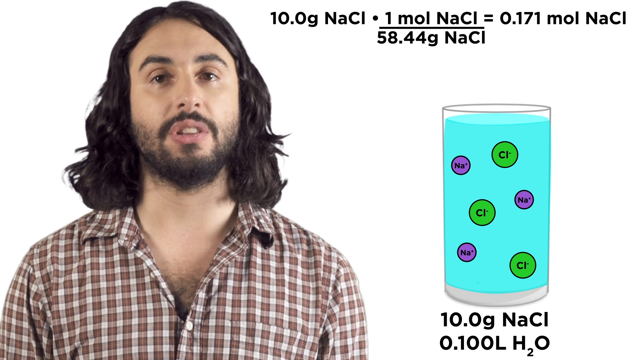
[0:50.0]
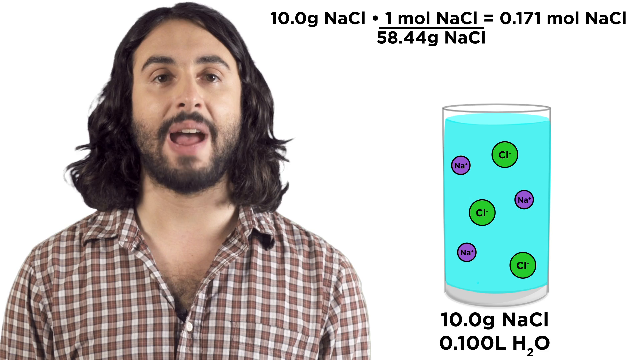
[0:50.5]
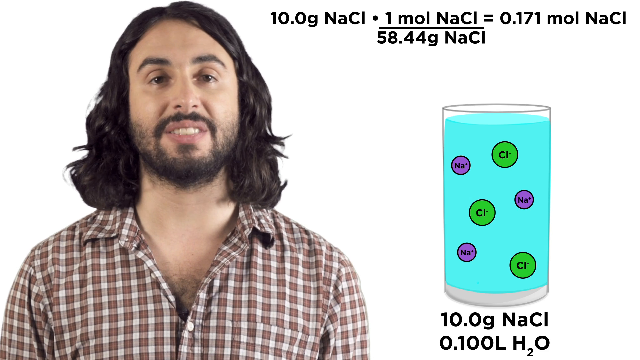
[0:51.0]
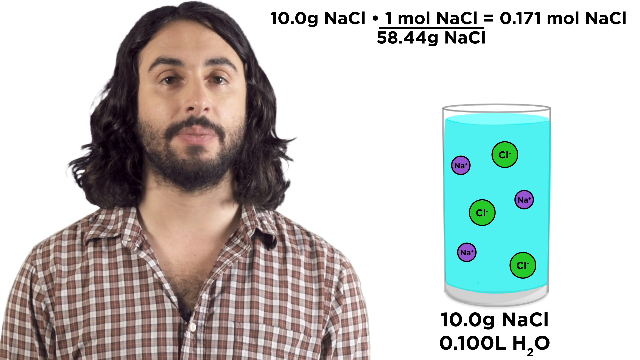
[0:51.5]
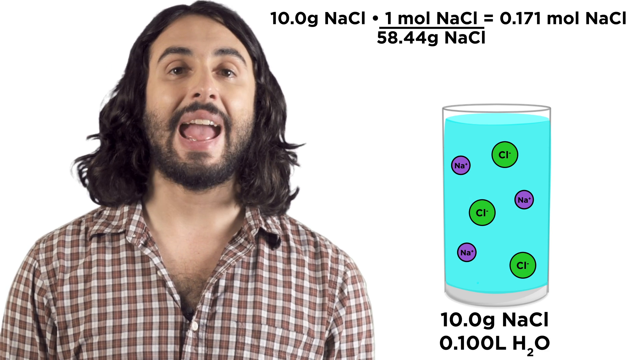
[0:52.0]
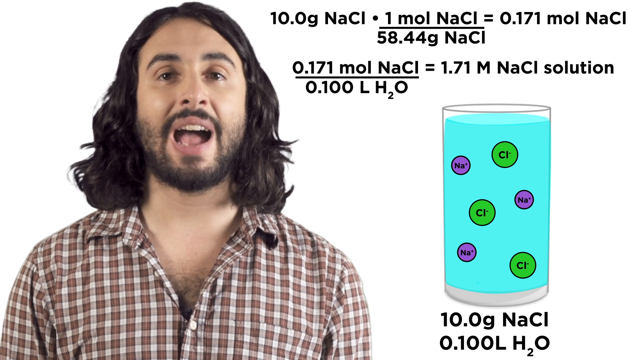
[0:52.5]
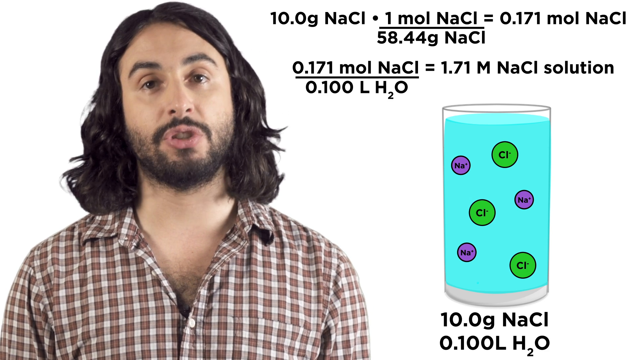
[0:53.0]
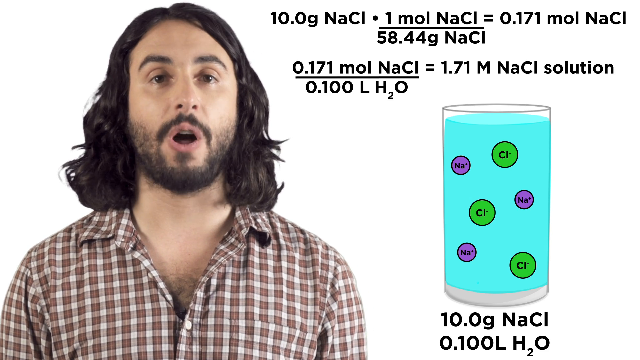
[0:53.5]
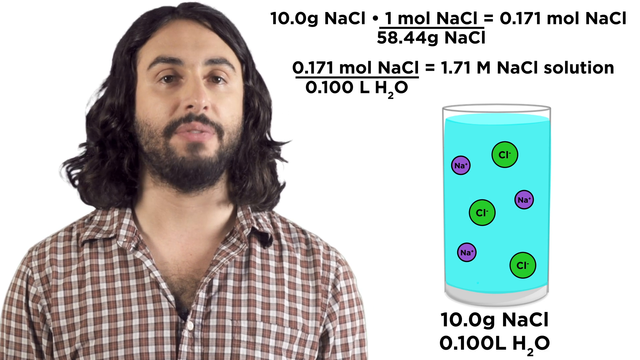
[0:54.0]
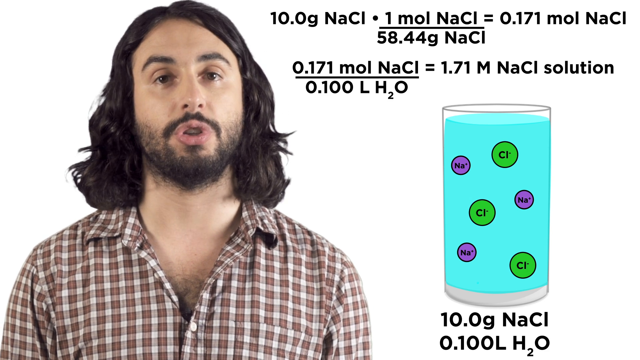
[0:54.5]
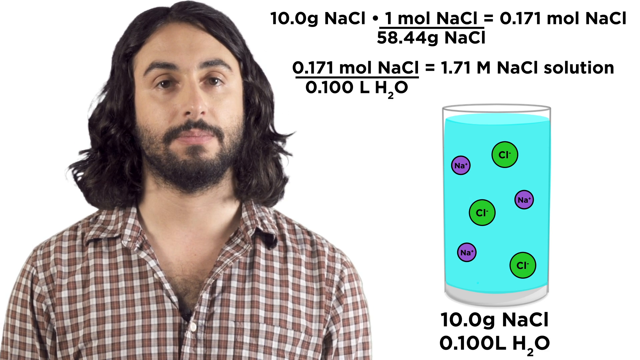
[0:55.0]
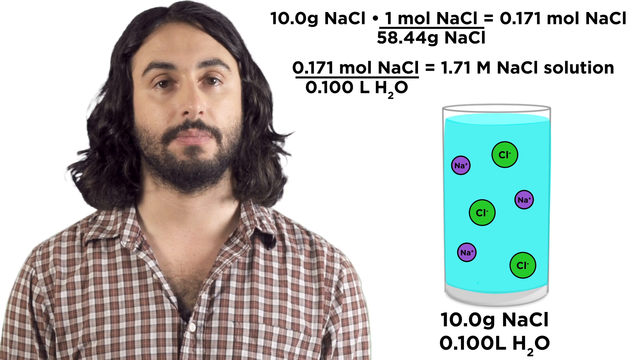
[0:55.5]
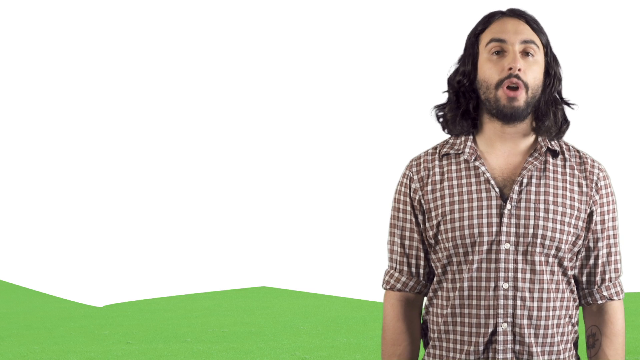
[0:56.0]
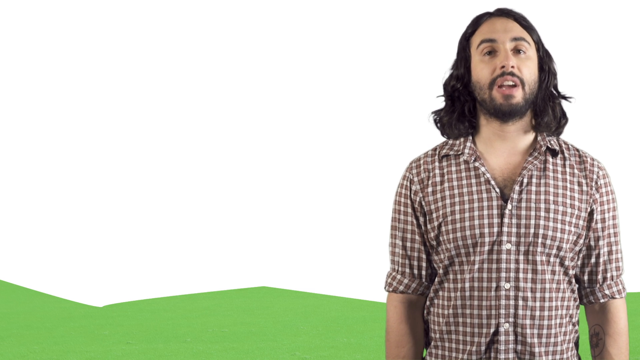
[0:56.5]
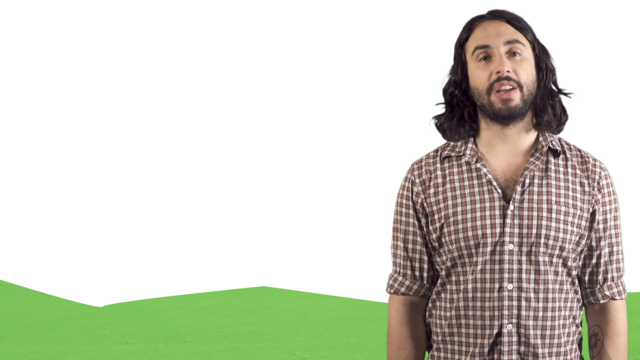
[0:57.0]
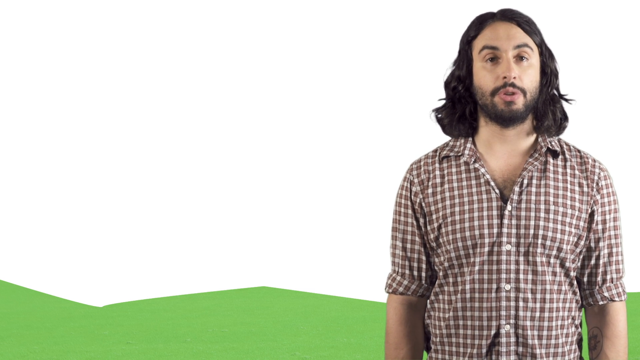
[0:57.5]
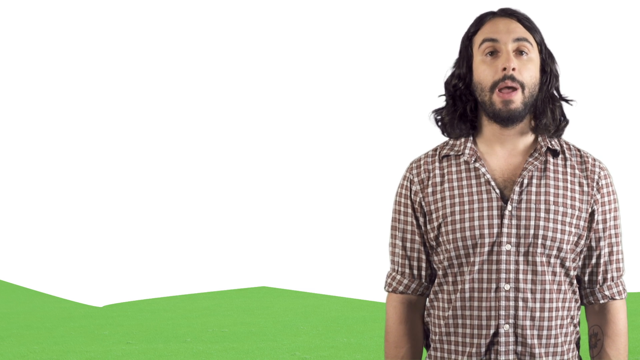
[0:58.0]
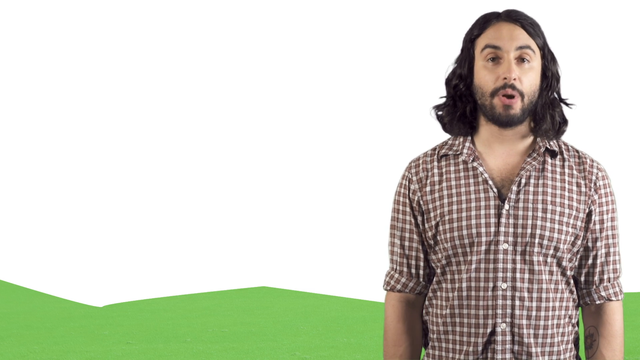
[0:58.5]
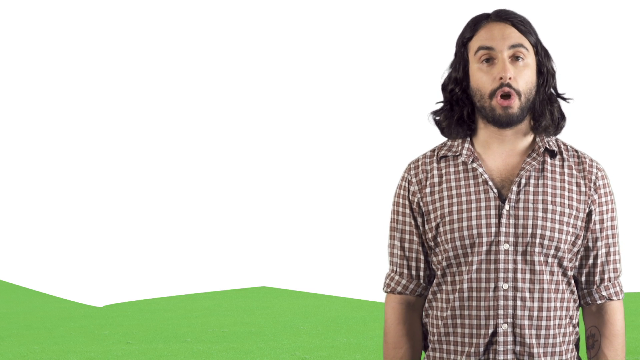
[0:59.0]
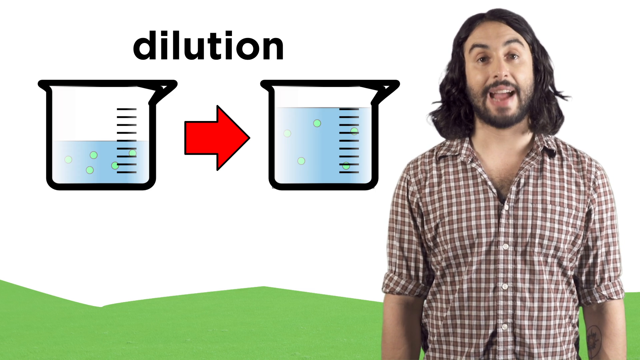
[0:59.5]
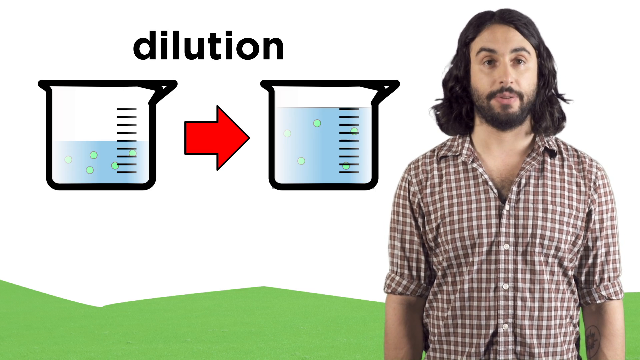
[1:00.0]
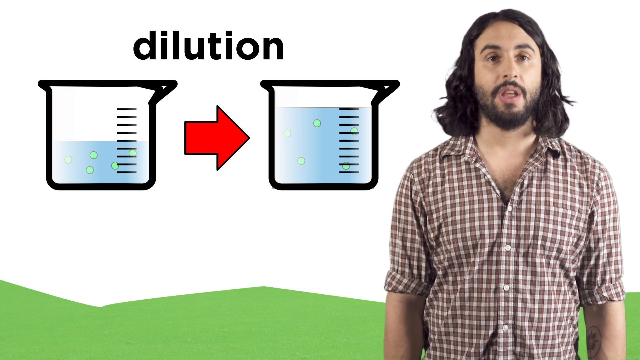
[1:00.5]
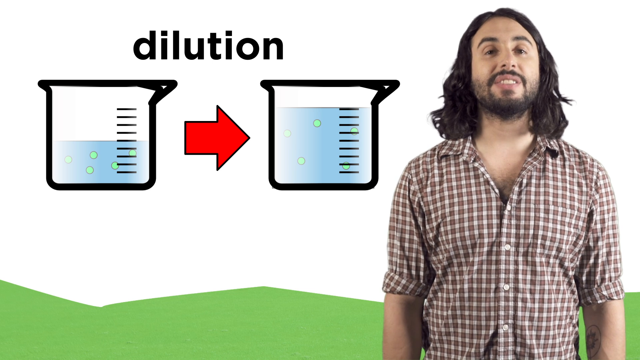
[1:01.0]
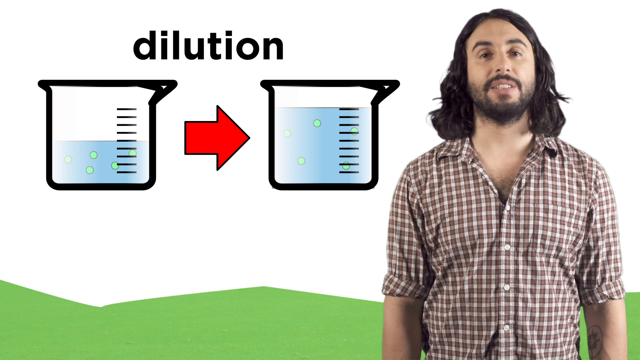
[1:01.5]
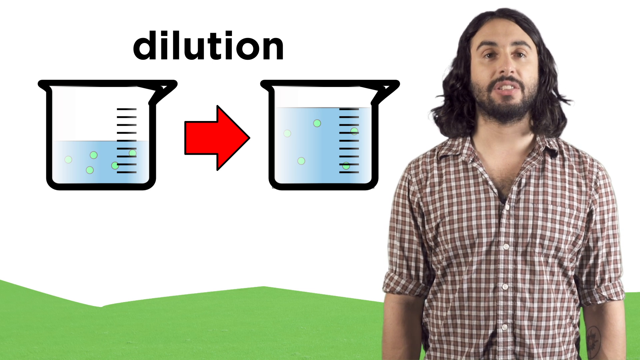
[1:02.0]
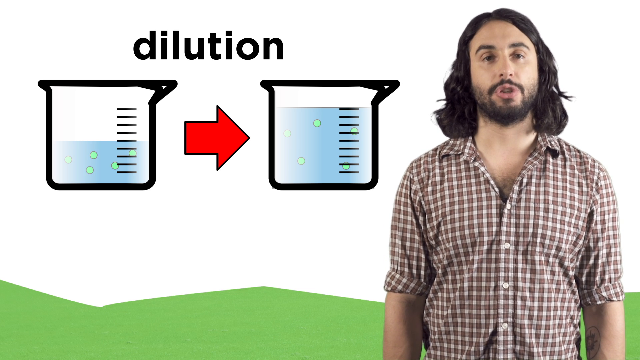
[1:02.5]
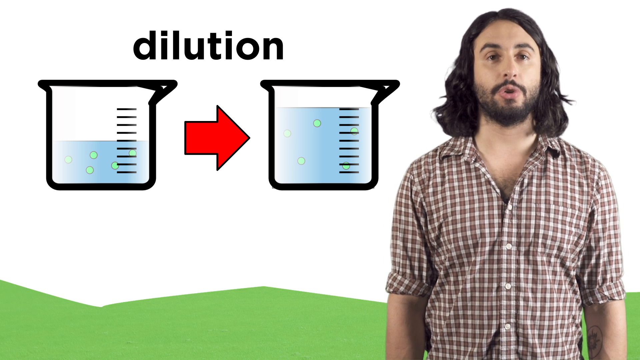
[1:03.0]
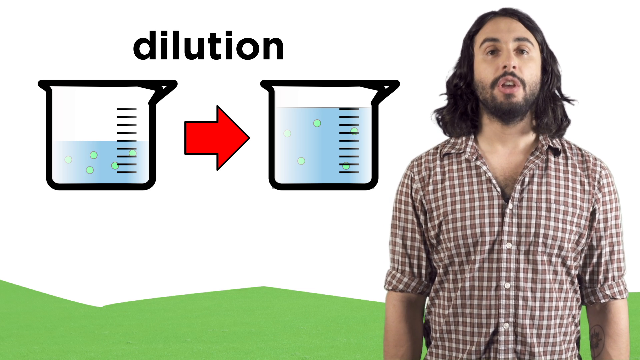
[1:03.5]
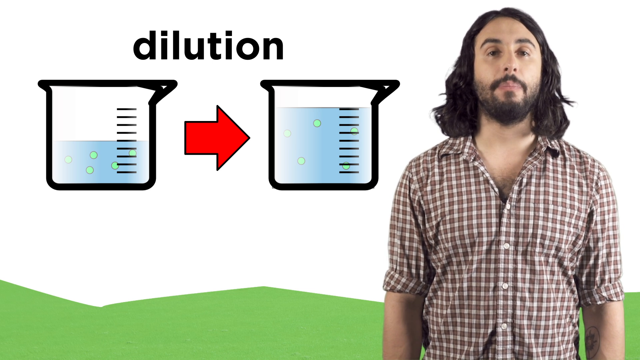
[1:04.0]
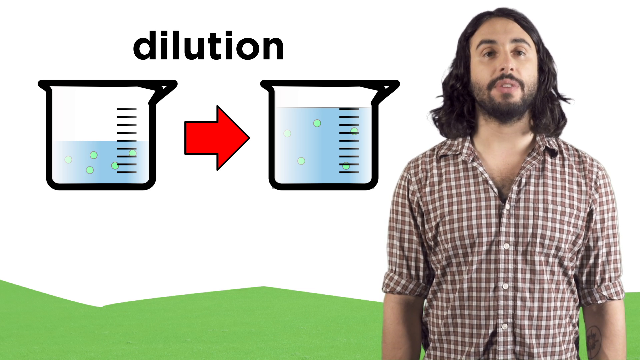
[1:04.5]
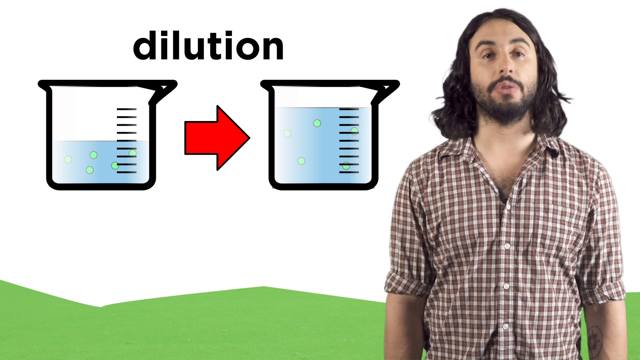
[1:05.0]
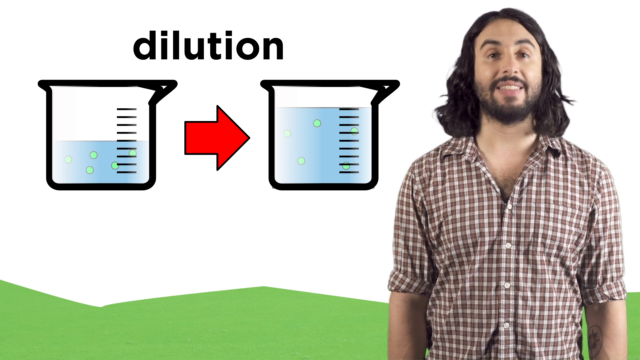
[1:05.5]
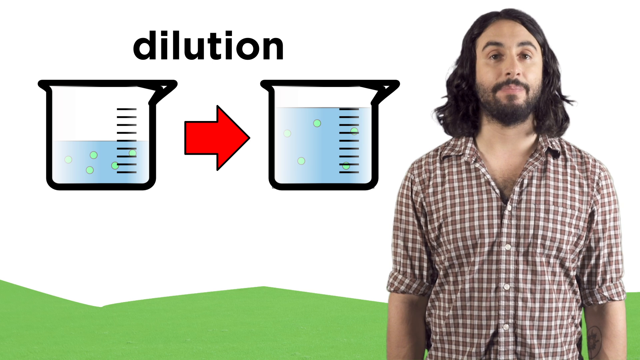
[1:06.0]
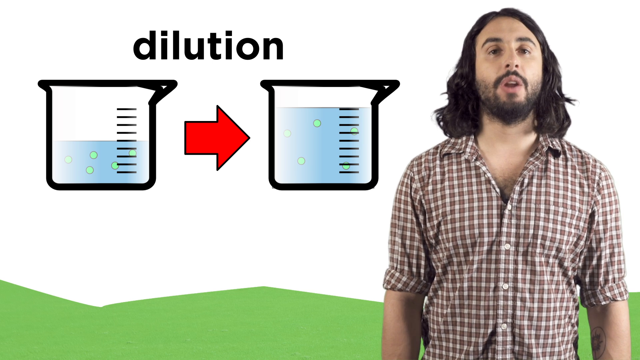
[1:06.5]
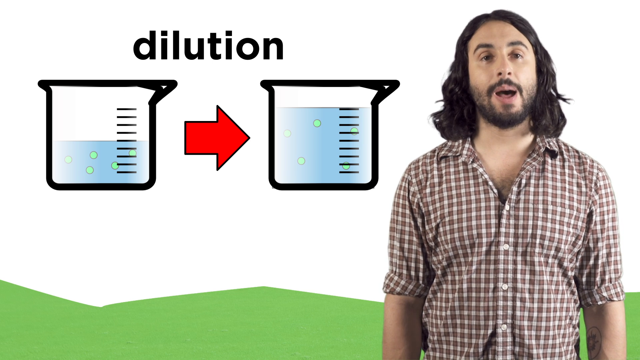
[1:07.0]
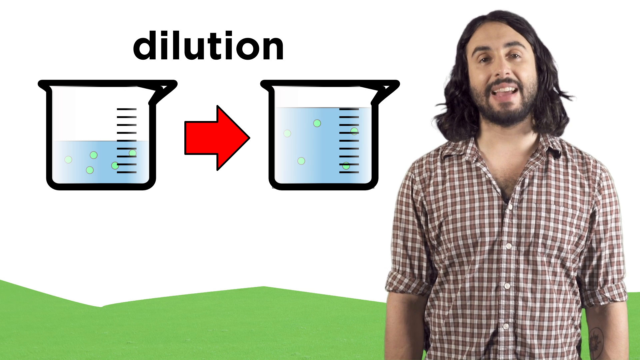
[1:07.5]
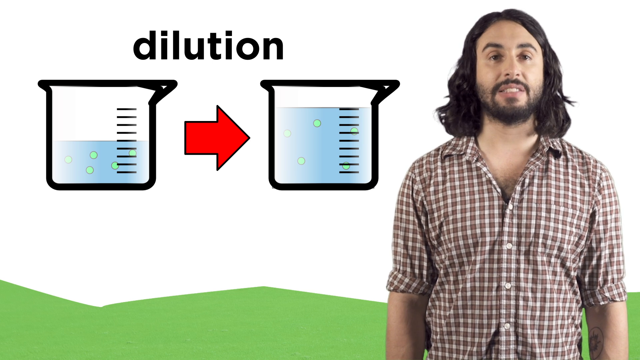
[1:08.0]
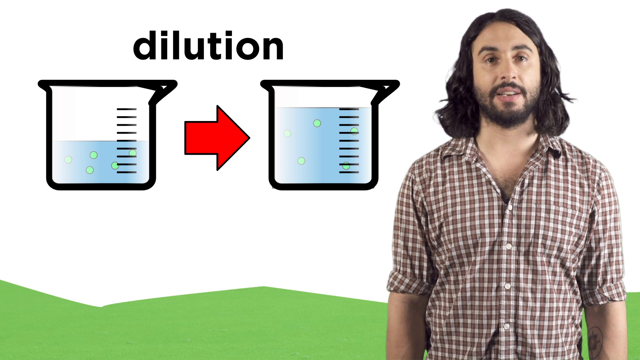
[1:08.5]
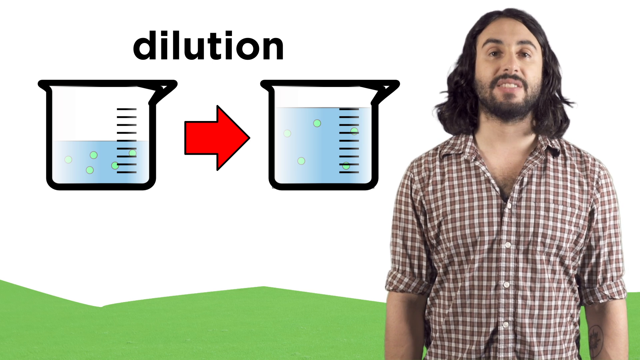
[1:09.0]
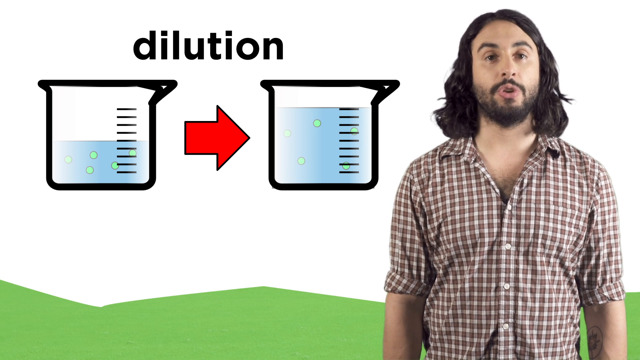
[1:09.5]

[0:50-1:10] A man in his 30s, with long black hair down to his neck and a black beard, wears a white and brown plaid button-up shirt. To the right is a drawing of a glass with water in it, containing three purple circles with "N.A." inside and three larger green circles with "C.L." inside. Two purple circles are on the left side of the glass, one near the top and one at the bottom, and the third is on the right side, between the other two. One green circle is at the top of the glass between two purple circles, one is in the middle among the three purple circles, and one is in the bottom right. At the top of the screen is the equation "10.0 G NaCl × 1 mol NaCl / 58.44 G NaCl = 0.171 mol NaCl". Underneath the glass is "10.0 G NaCl", and beneath that "0.100 L H2O". The man on the left talks, and another equation appears under the one in the top right: "0.171 mol NaCl / 0.100 L H2O = 1.71 M NaCl solution". The man talks and shakes his head. The scene then changes: the man is seen from the stomach up with his arms at his sides, talking in front of a white background with a small wavy green border at the bottom. In the white section on the left side of the screen, the word "dilution" appears in black, and underneath it are two drawn beakers, each with a column of about 10 horizontal black lines on its right side. The left beaker is filled with blue liquid to about the fifth line from the bottom and contains six green circles. A red arrow to the right of this beaker points right to the other beaker, which is filled all the way to the top black line and has about four green circles in the blue liquid. Meanwhile, the man on the right talks, looking at the camera.